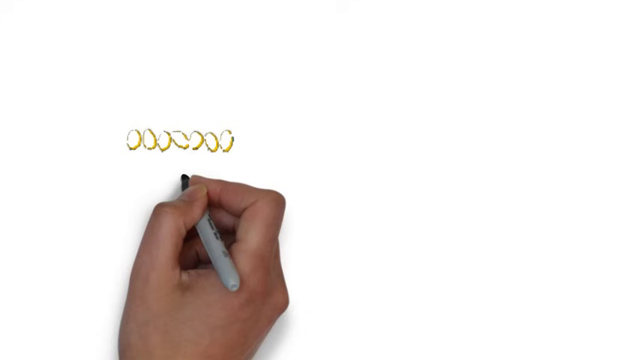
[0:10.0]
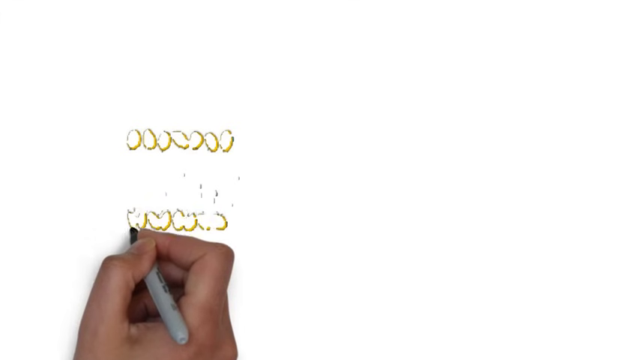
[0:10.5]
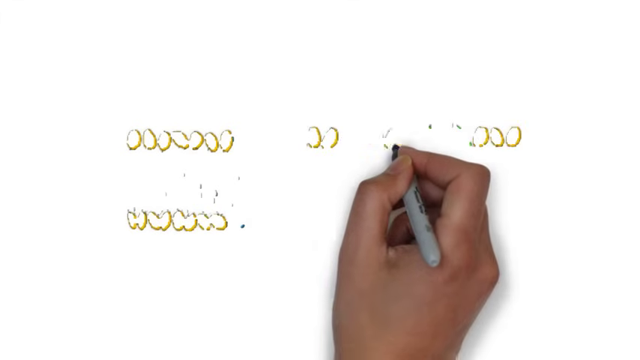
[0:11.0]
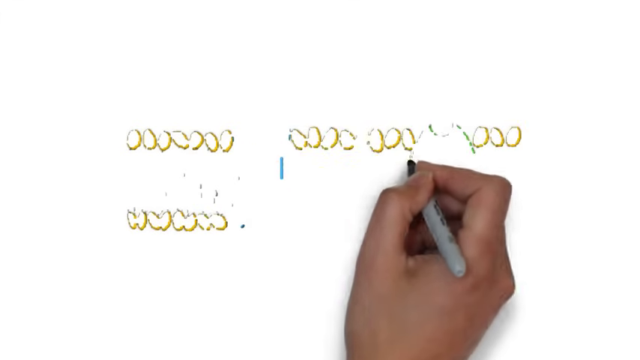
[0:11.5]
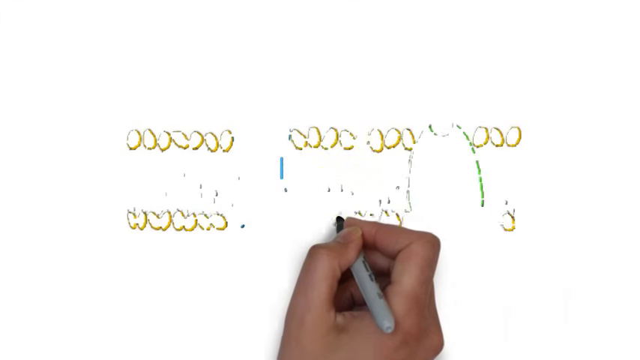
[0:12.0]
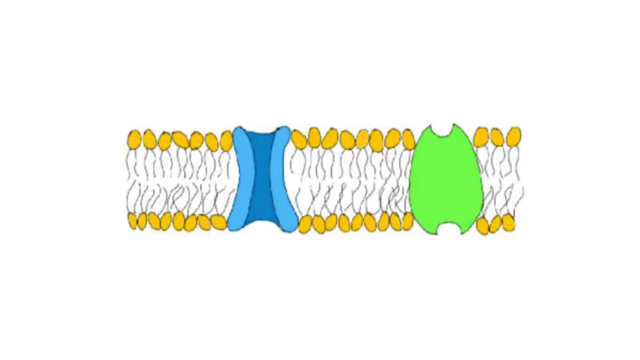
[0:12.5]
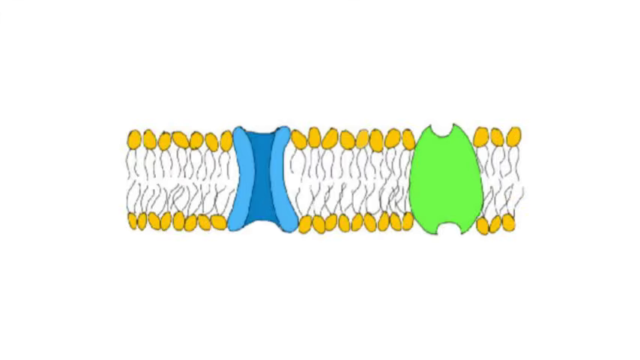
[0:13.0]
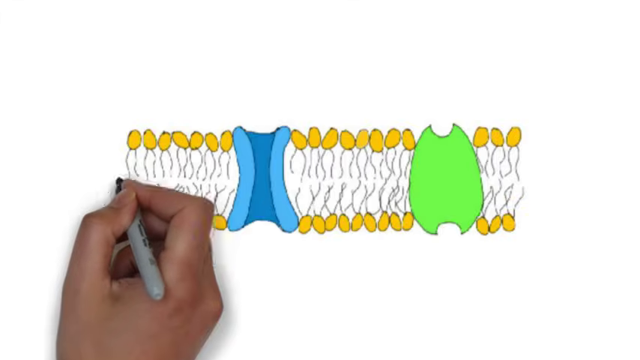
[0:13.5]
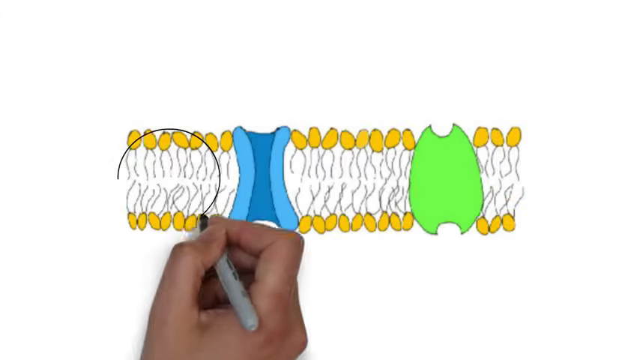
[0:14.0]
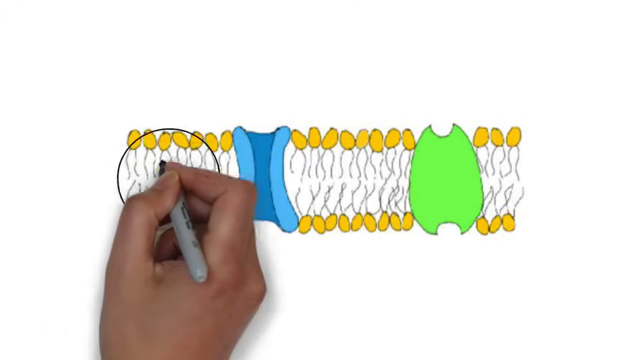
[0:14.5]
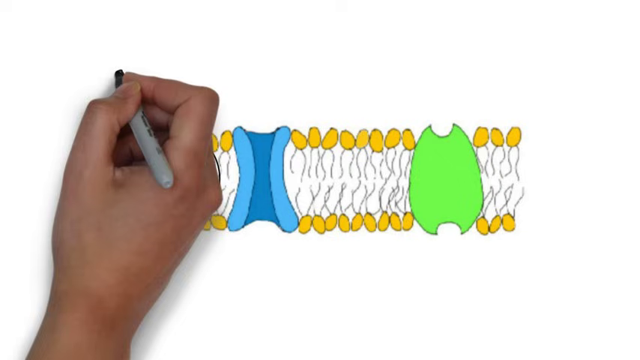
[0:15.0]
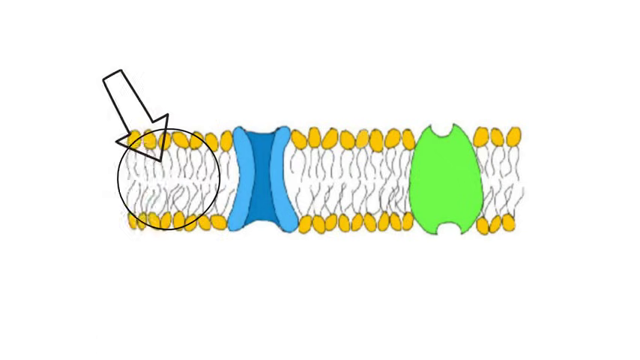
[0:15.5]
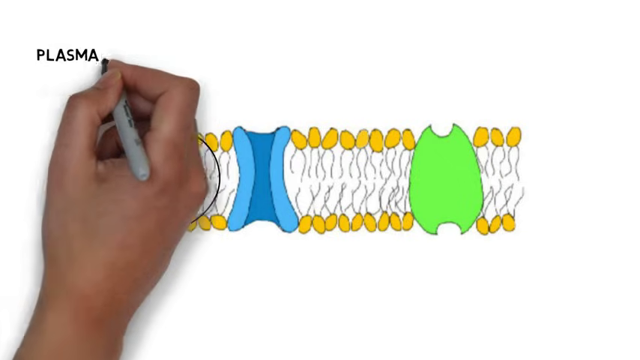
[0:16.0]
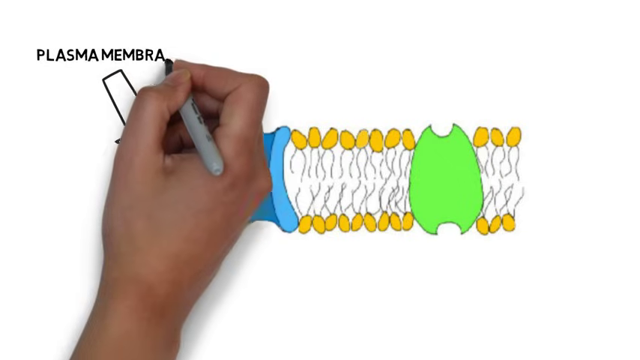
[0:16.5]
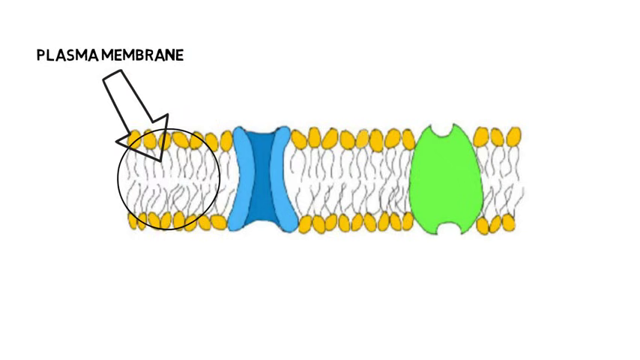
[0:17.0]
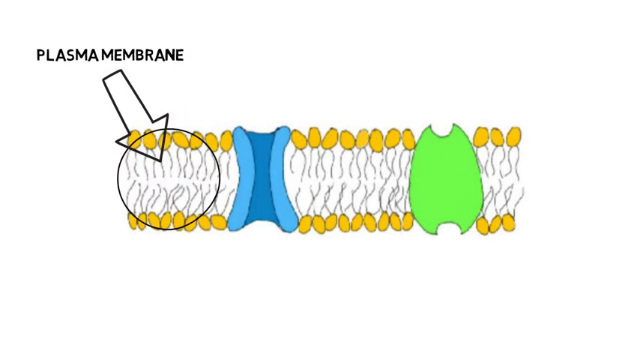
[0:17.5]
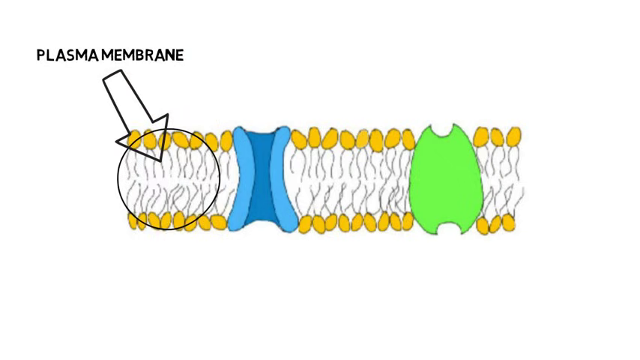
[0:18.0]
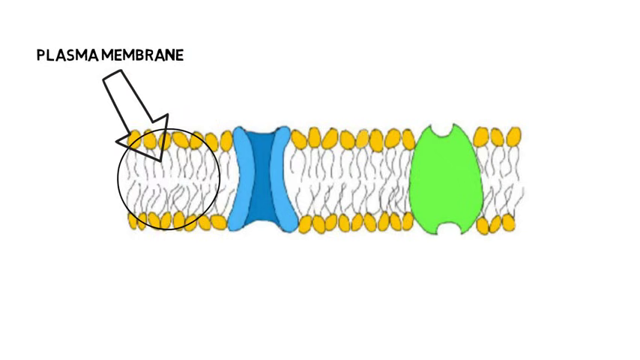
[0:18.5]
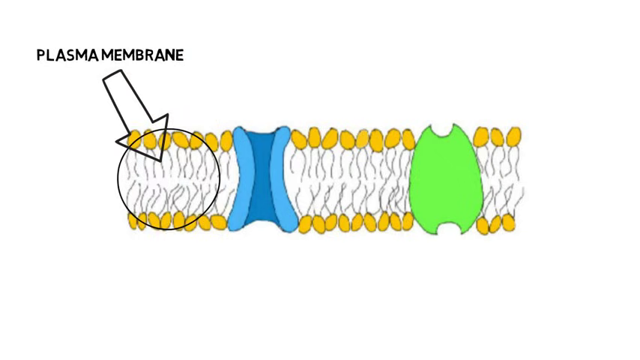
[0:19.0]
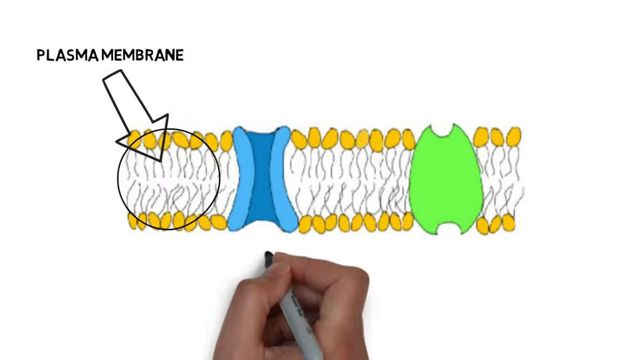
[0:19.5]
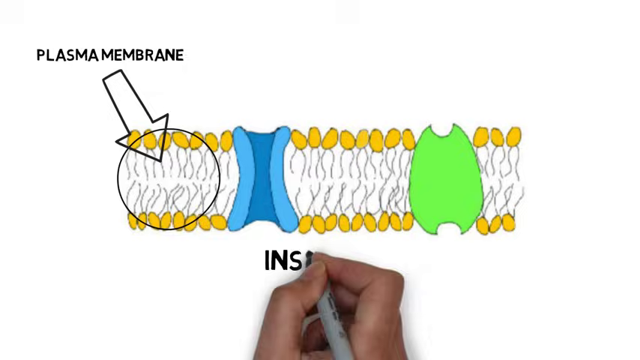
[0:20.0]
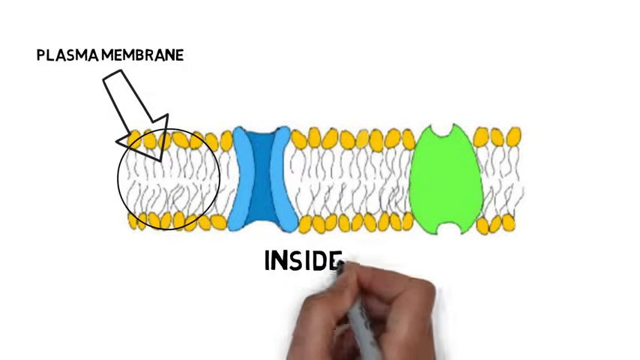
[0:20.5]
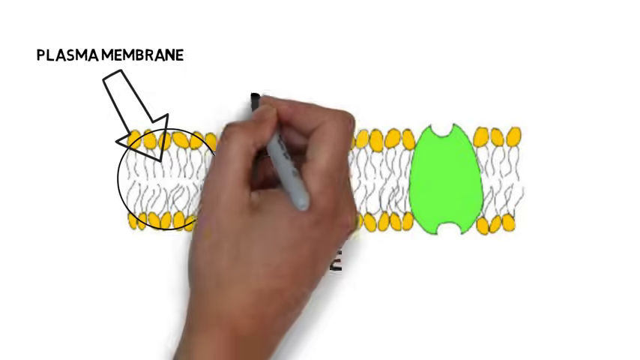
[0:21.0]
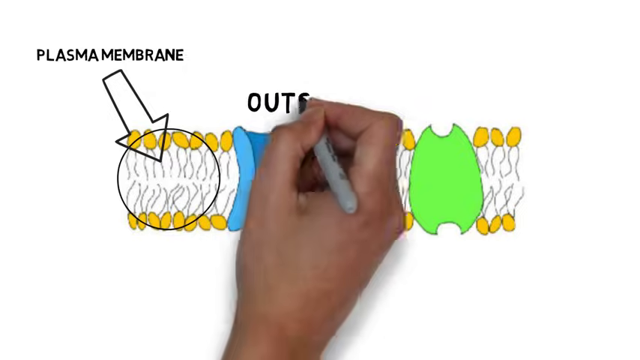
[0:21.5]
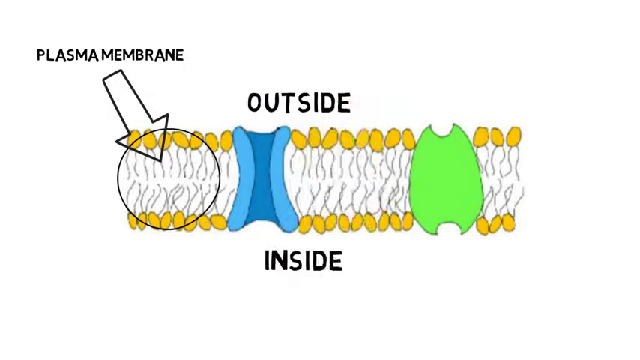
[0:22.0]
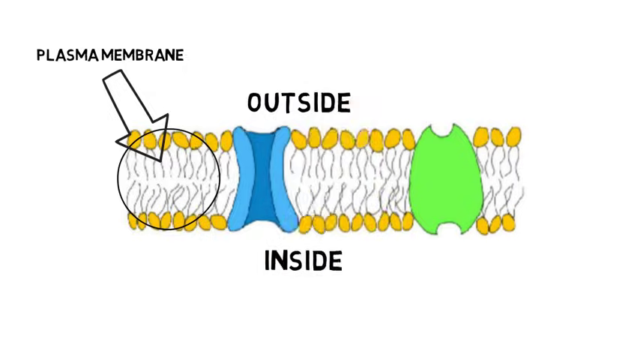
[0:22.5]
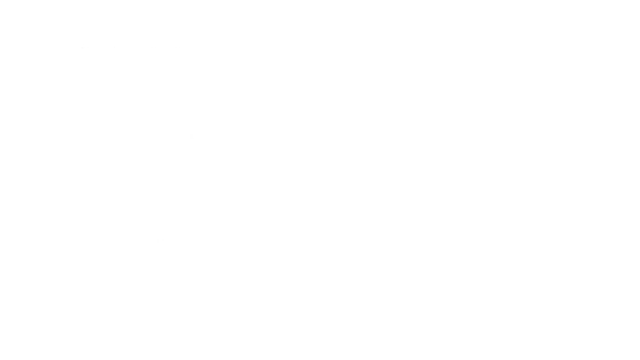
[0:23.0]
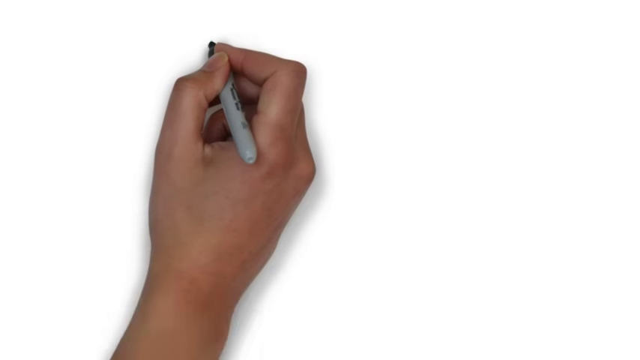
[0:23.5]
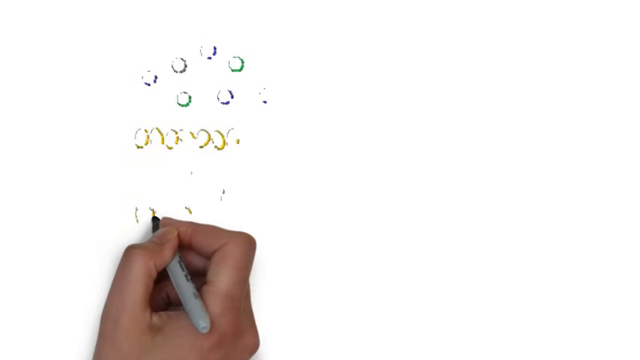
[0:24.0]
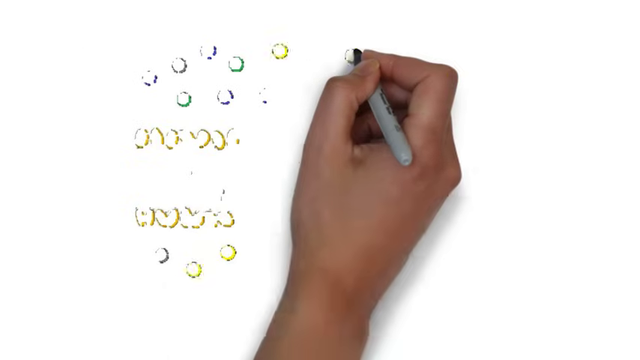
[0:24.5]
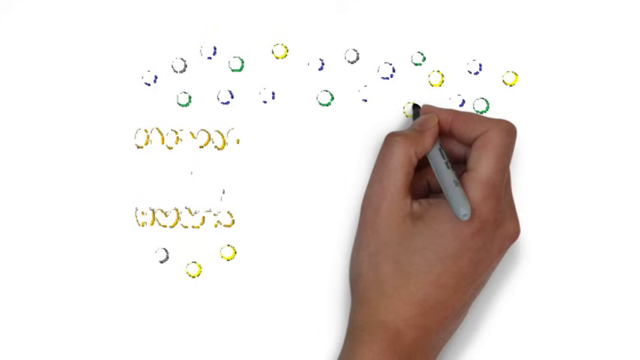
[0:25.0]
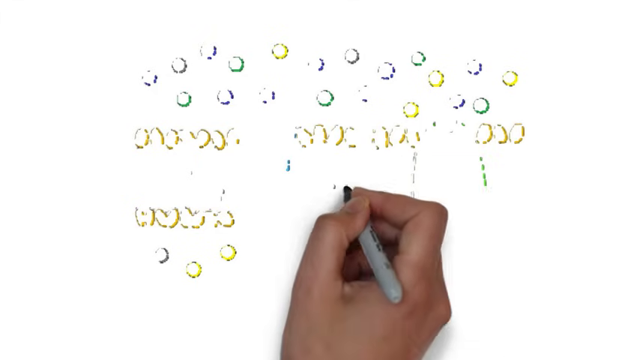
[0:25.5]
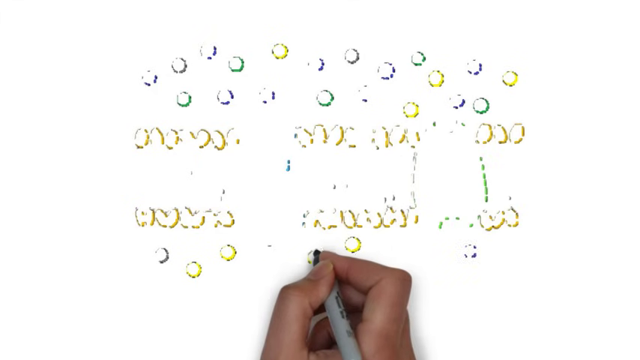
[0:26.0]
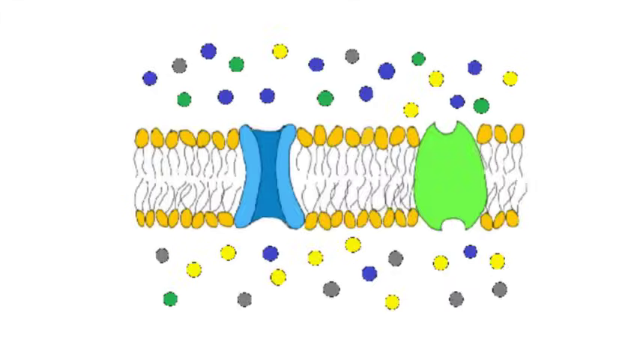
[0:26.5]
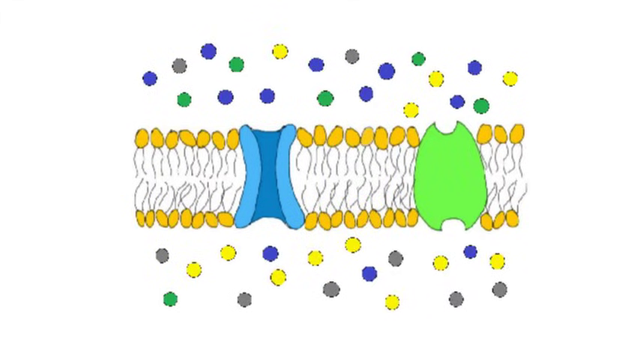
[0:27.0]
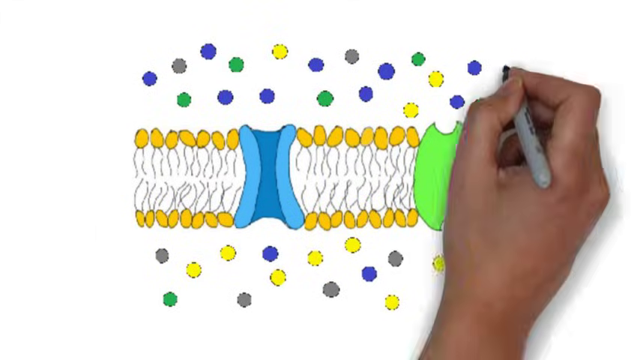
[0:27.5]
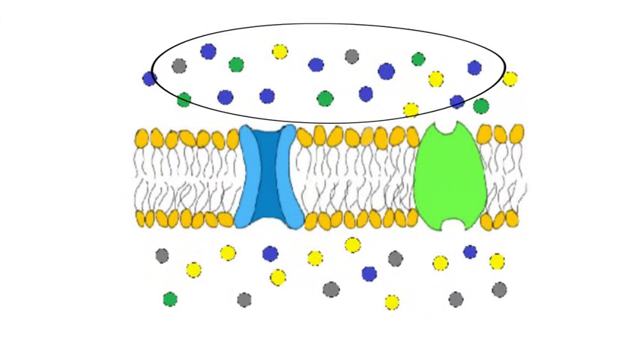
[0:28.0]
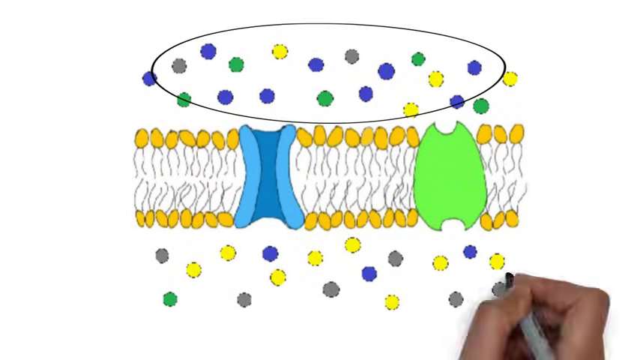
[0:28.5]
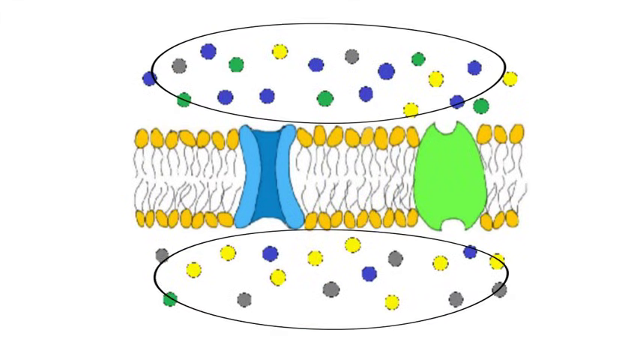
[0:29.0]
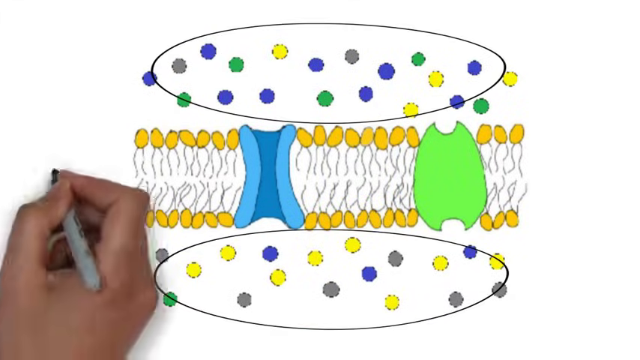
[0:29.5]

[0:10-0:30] The hand continues drawing, writing a label that includes the word "plasma". The drawing looks like a bunch of cells or sperm, horizontally positioned, with little yellow tails. Along a bottom line they are all positioned going downward, and along the upper horizontal border they are lined up going up. On the left there is a blue separation, some kind of membrane, and on the right there is a green egg-shaped partition. Above and below are many multicolored dots encircled by ovals; they are blue, yellow and green, and a couple seem to be gray. The hand starts to write something that cannot be made out.